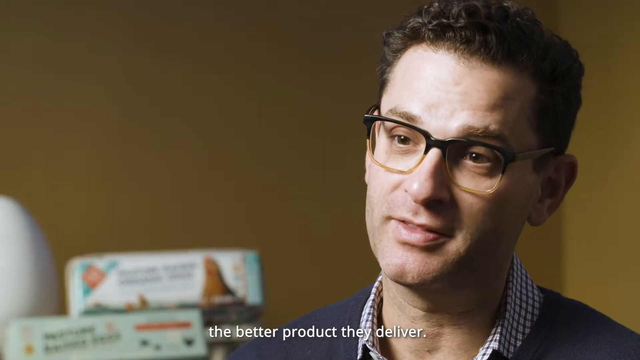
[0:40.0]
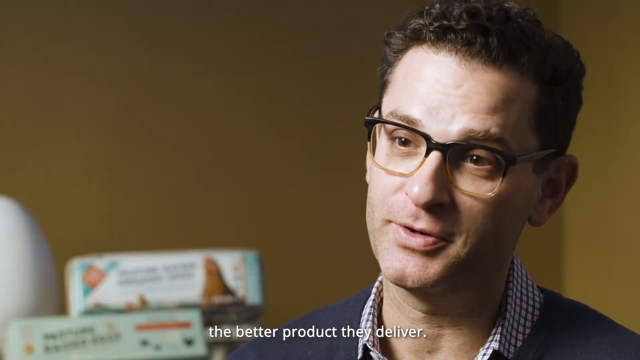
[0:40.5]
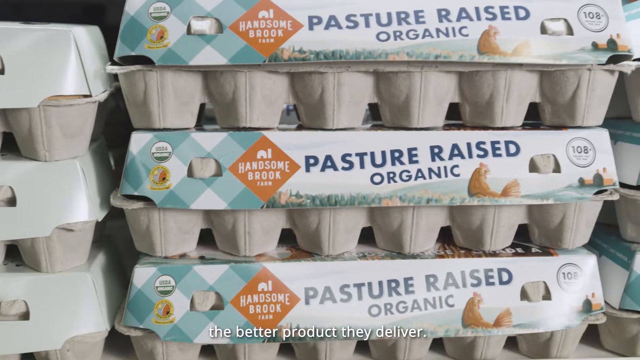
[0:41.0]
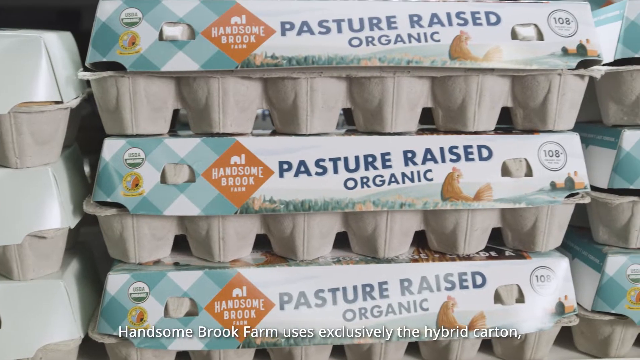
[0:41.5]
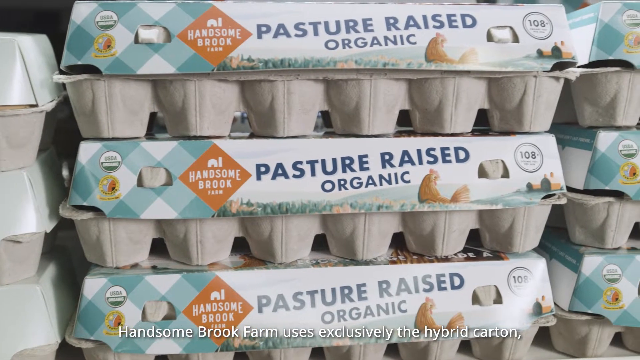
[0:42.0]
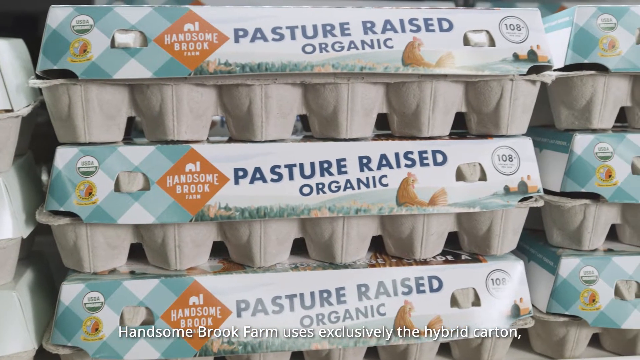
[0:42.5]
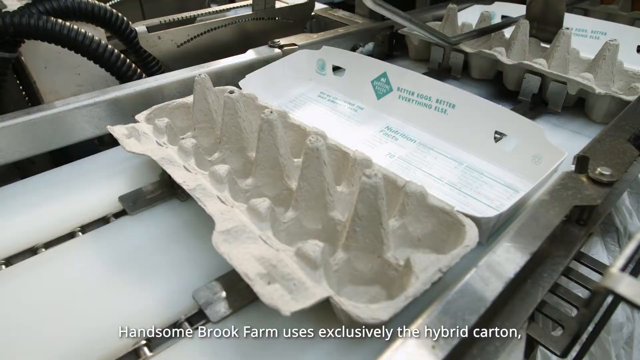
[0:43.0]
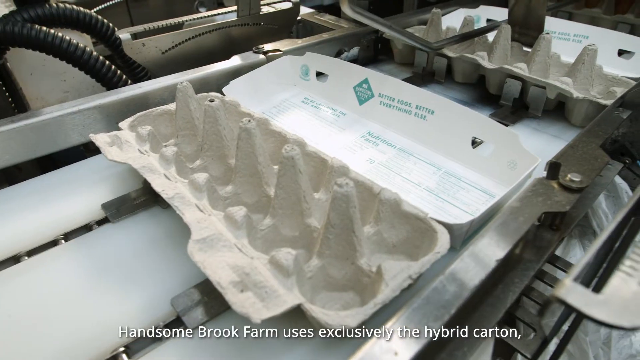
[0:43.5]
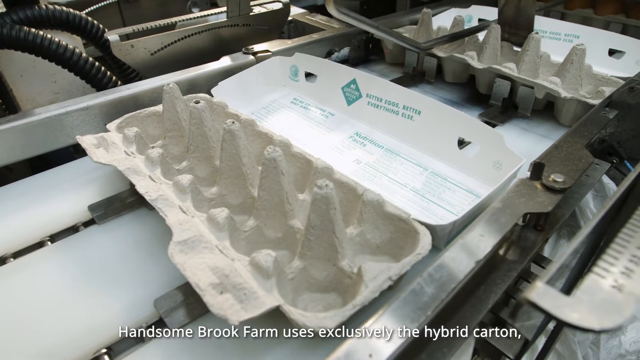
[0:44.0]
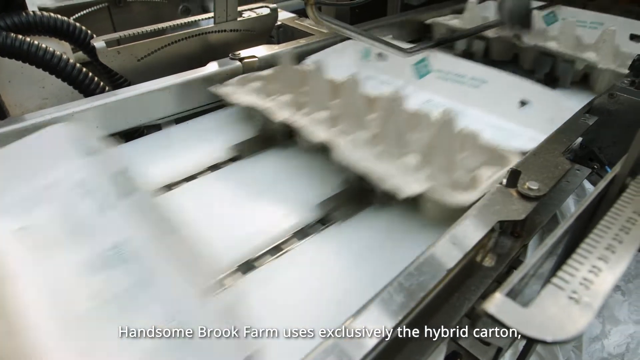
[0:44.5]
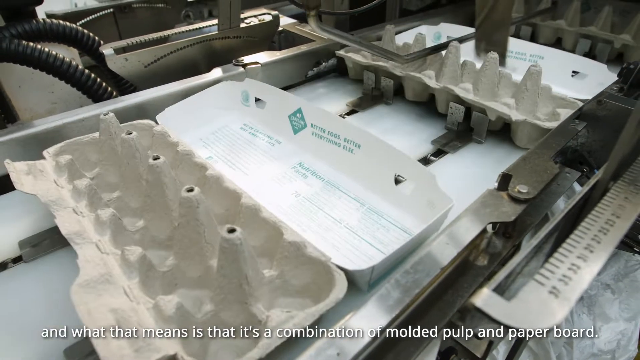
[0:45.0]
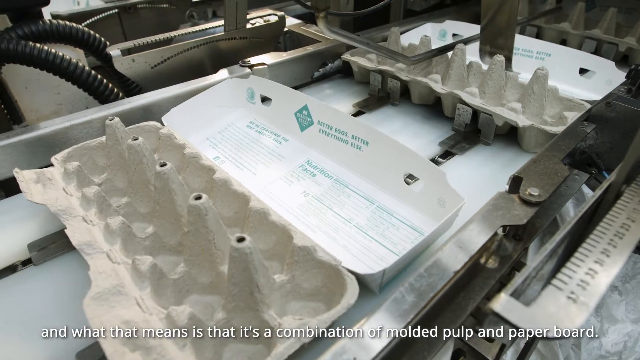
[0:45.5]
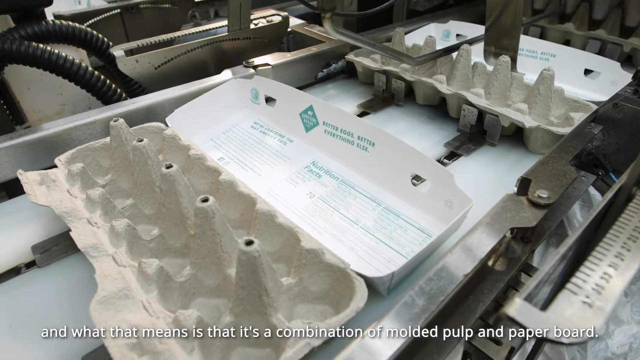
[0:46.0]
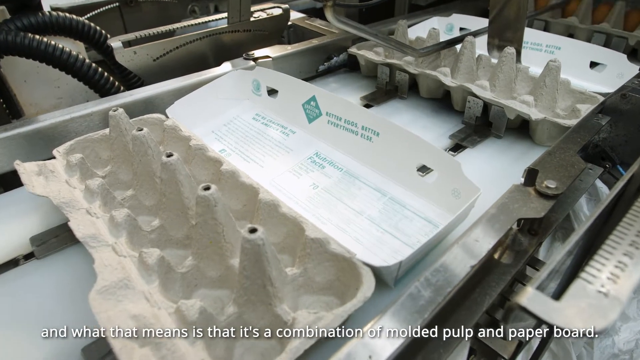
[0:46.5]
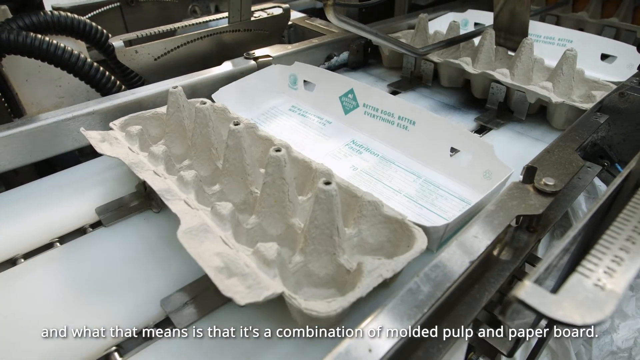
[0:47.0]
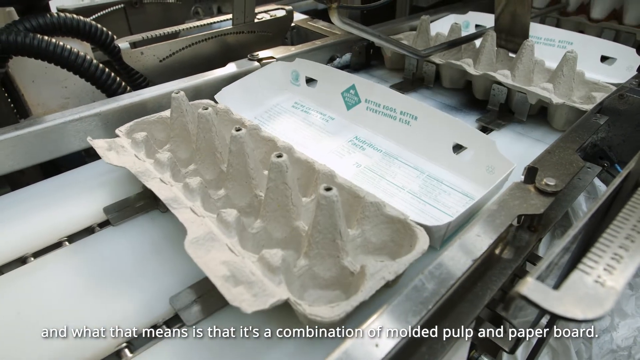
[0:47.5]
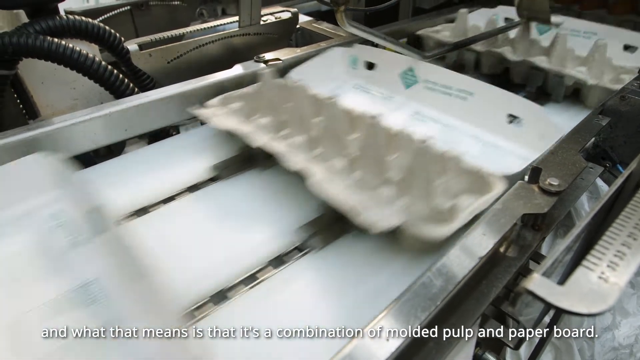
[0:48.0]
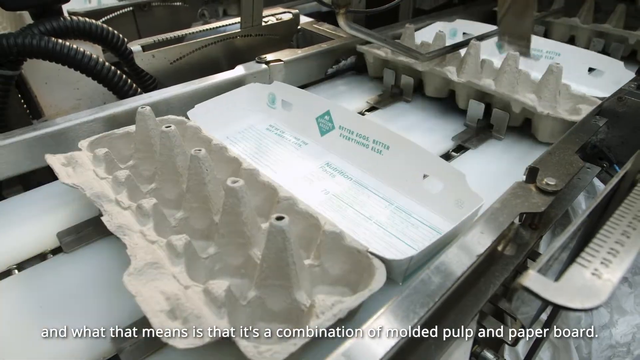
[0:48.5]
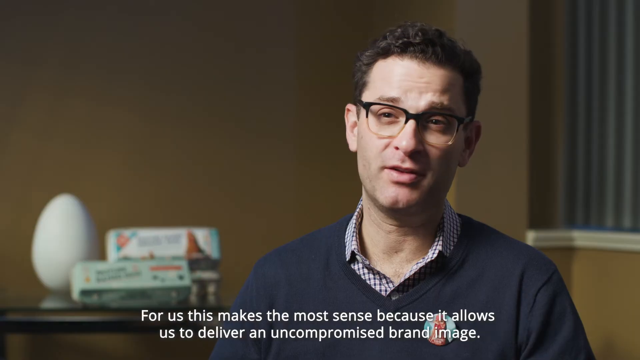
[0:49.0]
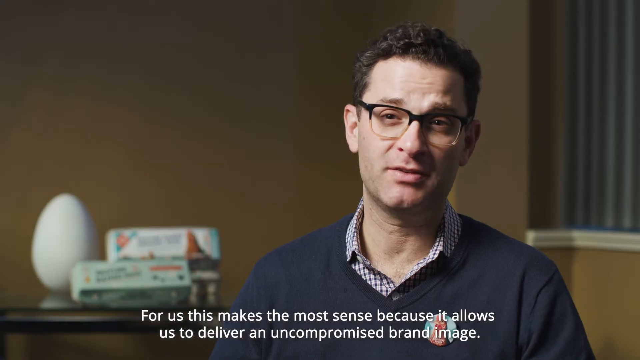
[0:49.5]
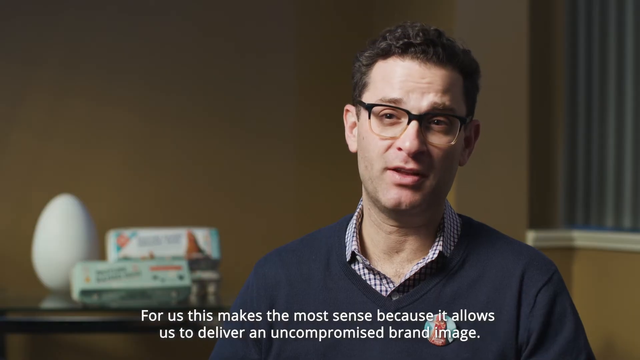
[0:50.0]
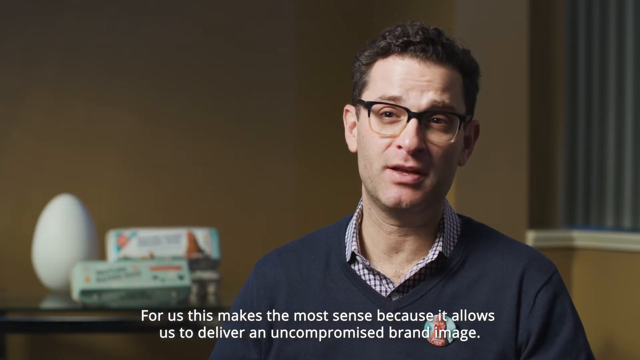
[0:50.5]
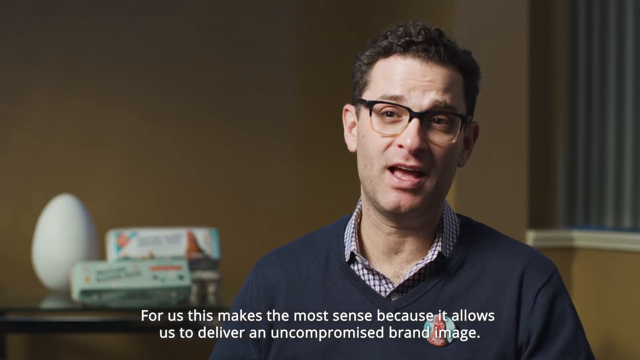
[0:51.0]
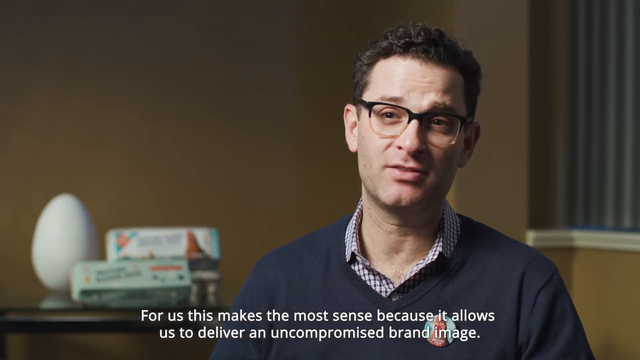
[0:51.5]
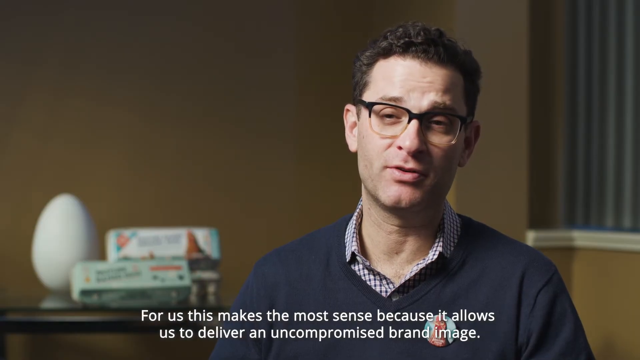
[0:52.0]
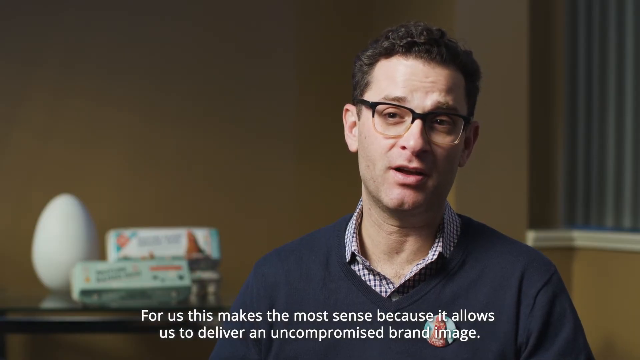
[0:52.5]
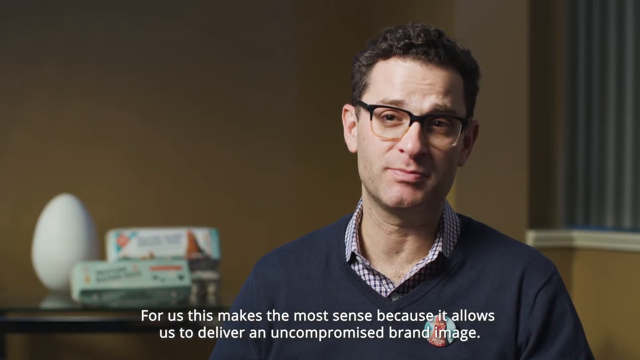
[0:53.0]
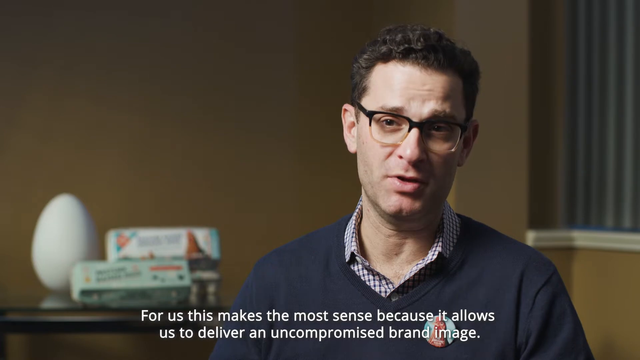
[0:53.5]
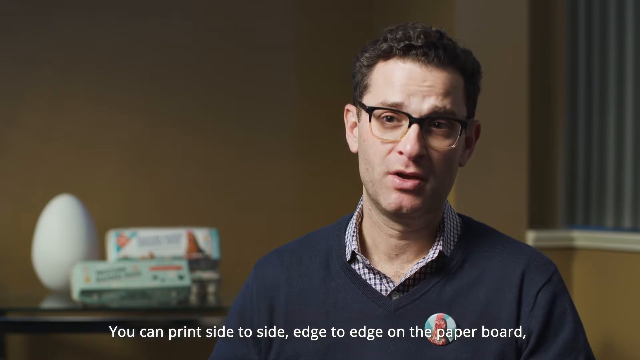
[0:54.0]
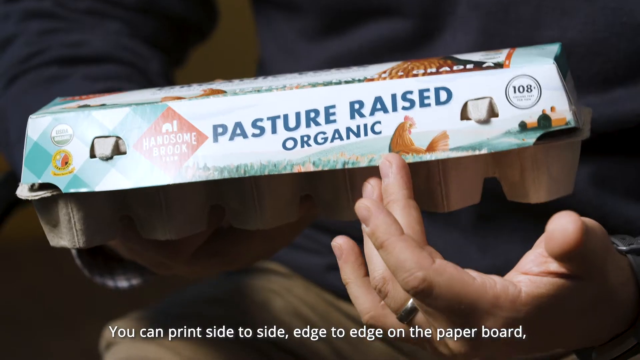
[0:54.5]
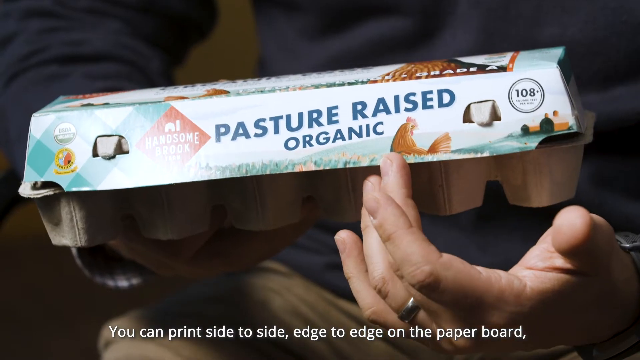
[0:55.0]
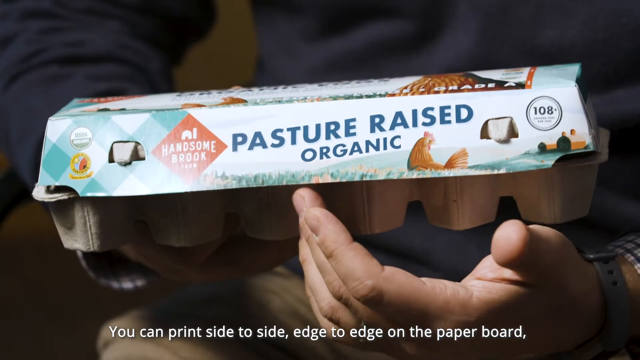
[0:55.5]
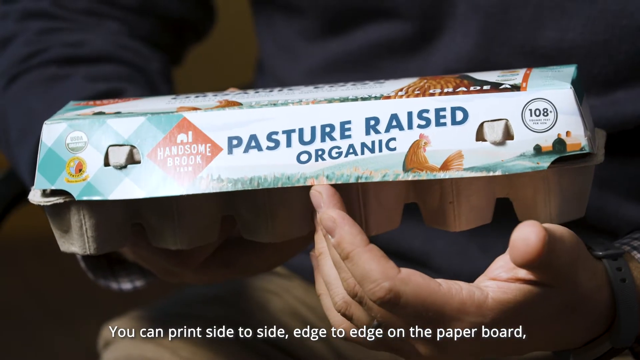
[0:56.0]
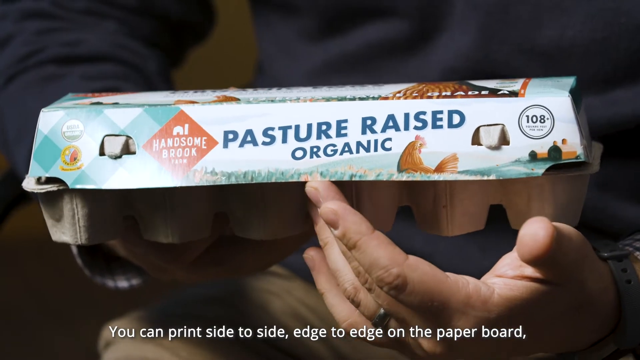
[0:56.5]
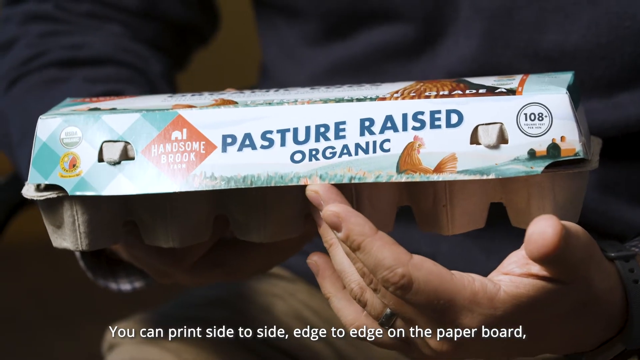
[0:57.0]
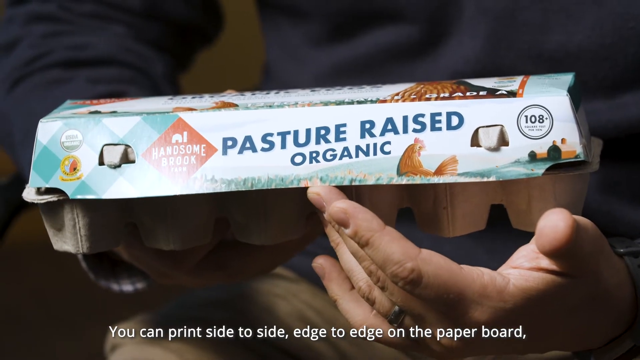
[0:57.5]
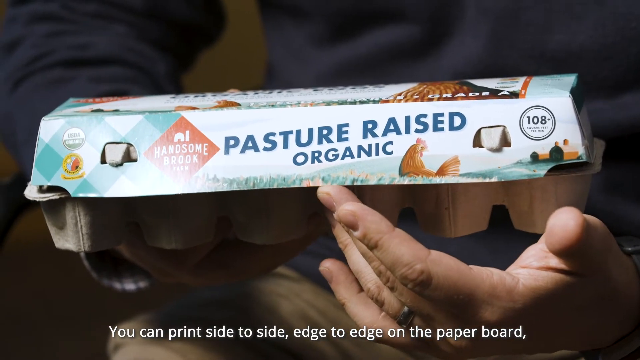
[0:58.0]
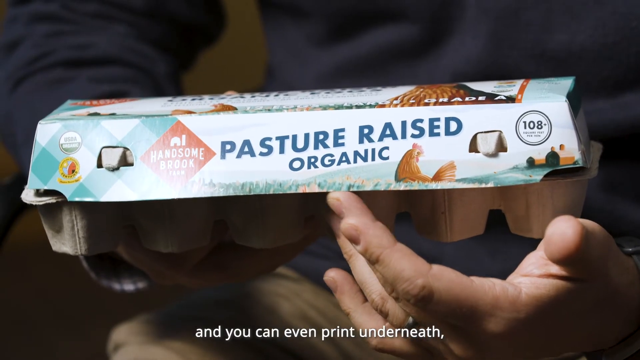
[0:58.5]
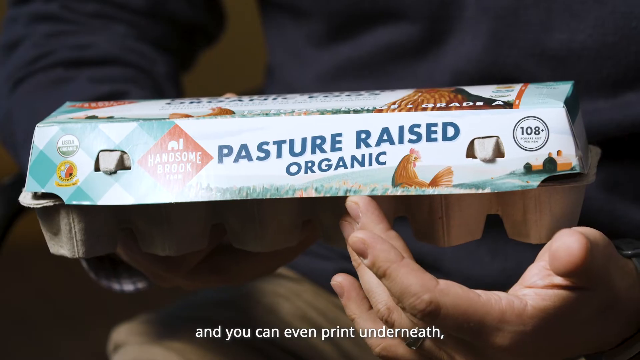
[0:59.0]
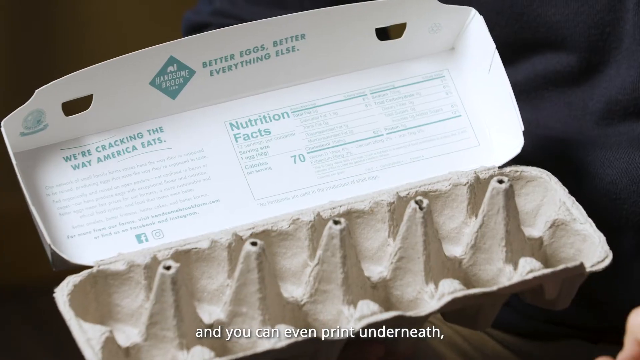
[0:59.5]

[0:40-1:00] The camera pans across a stack of egg boxes that look as if they are on a shelf in a store. The boxes say "Handsome Brook eggs, pasture raised, organic," and each apparently holds 12 eggs. Subtitles read: "Handsome Brook Farm uses exclusively the hybrid carton. And what that means is that it's a combination of moulded pulp and paperboard. For us, this makes the most sense because it allows us to deliver an uncompromised brand image. You can print side-to-side, edge-to-edge on the paperboard. and you can even print underneath." Footage filmed inside a factory shows egg boxes being pushed along the production line. The video cuts back to the interview, then to a close-up of the interviewee's hands holding a box of the eggs, and then to a shot of an open egg box.